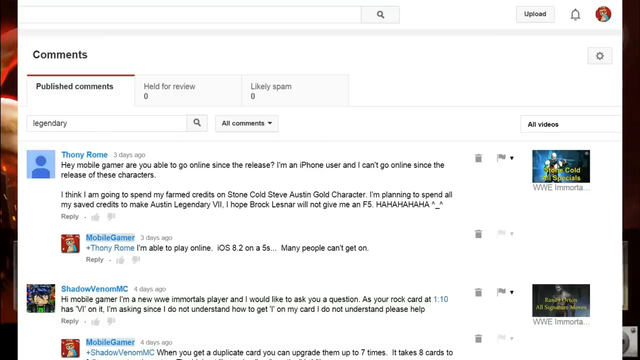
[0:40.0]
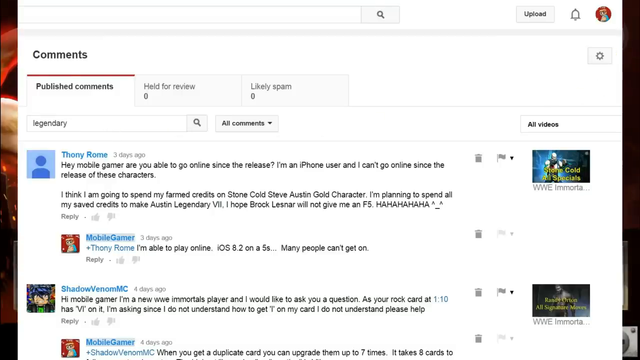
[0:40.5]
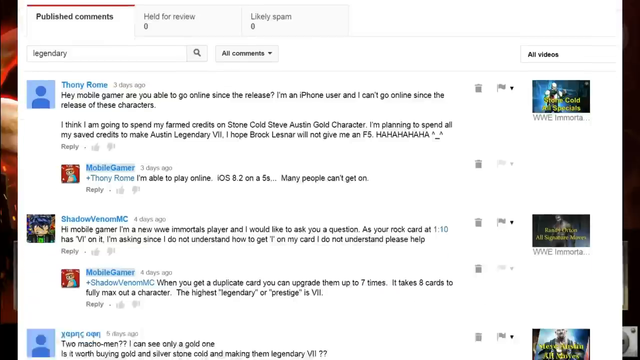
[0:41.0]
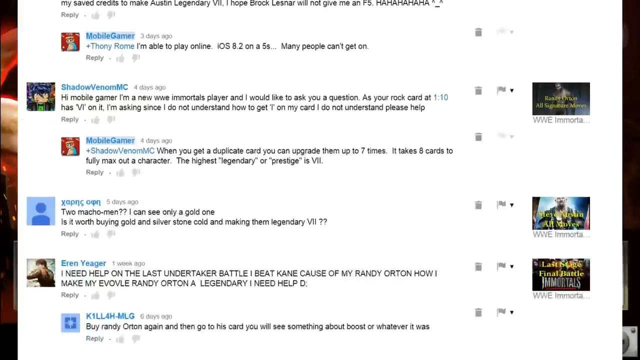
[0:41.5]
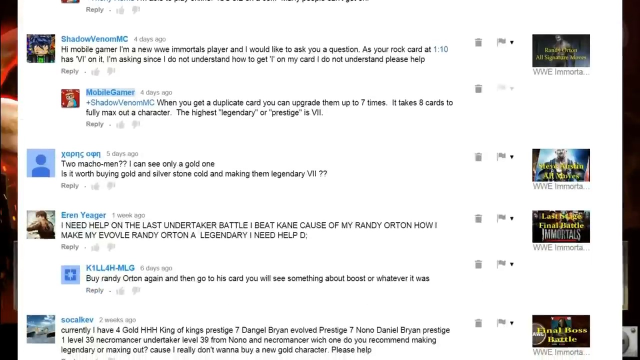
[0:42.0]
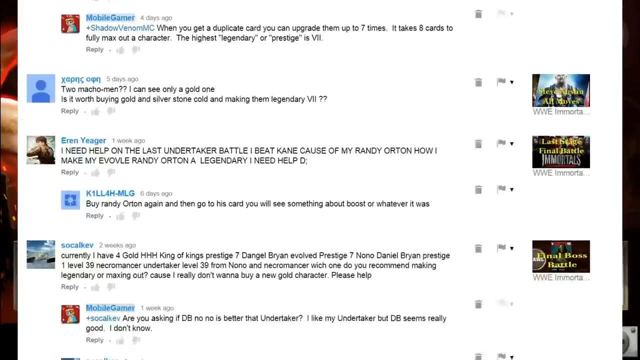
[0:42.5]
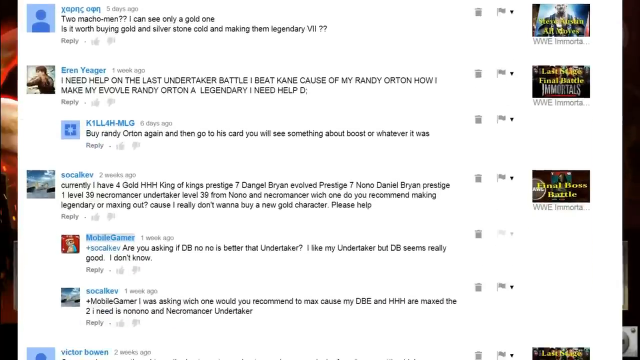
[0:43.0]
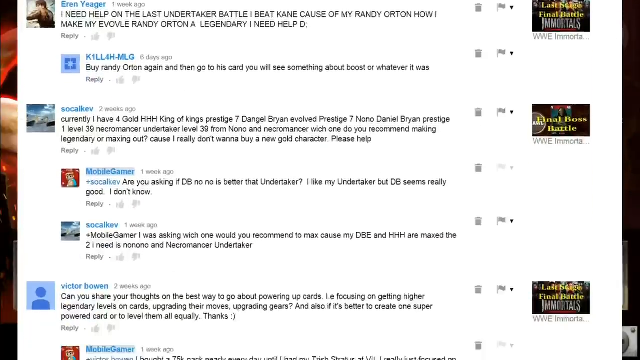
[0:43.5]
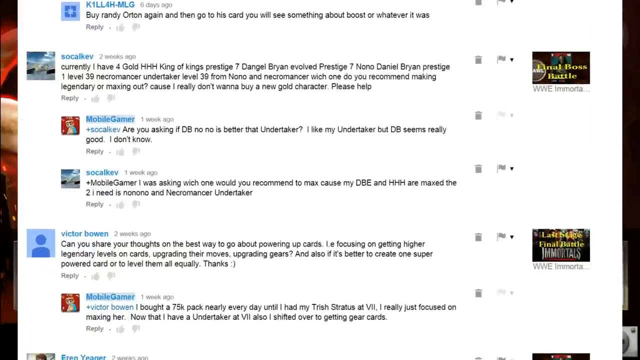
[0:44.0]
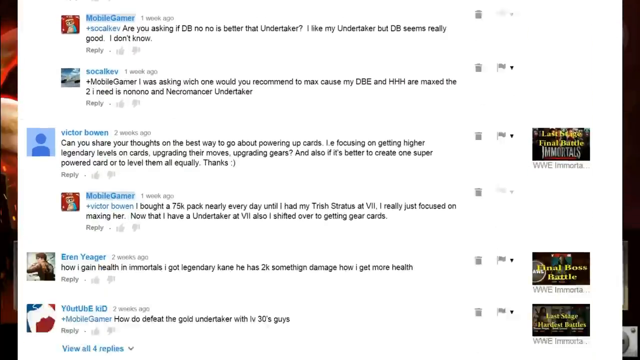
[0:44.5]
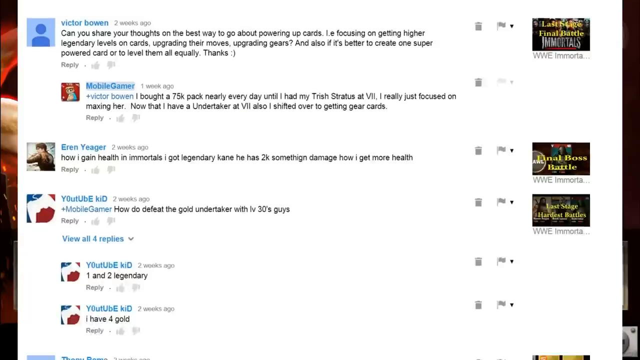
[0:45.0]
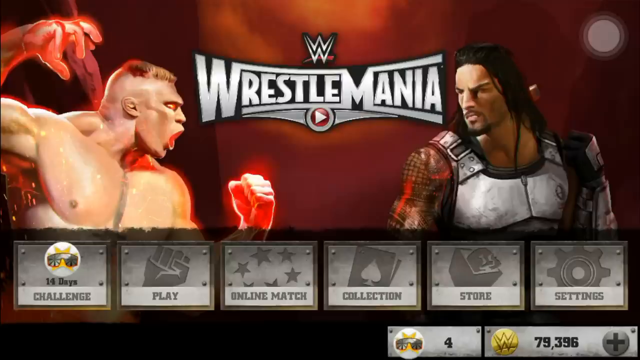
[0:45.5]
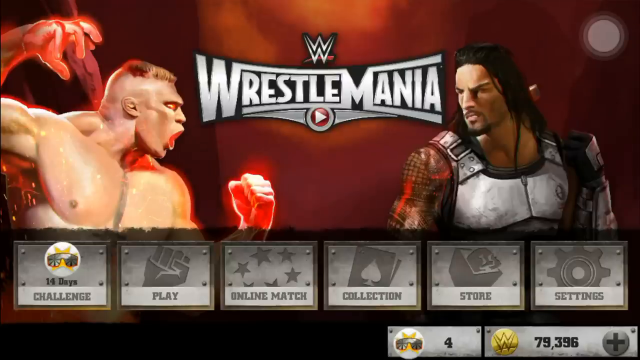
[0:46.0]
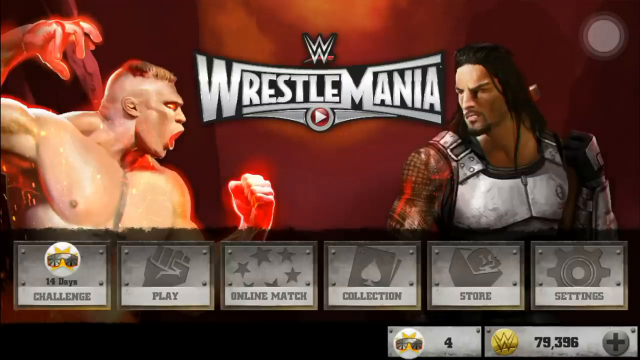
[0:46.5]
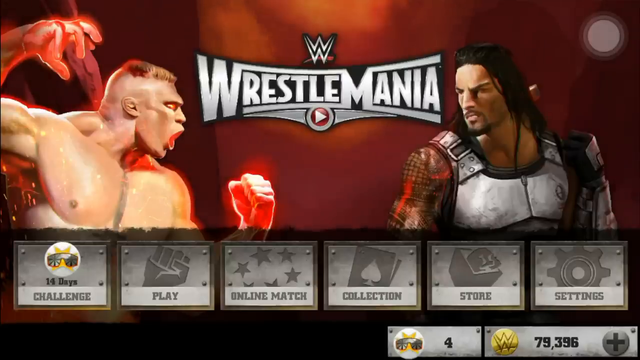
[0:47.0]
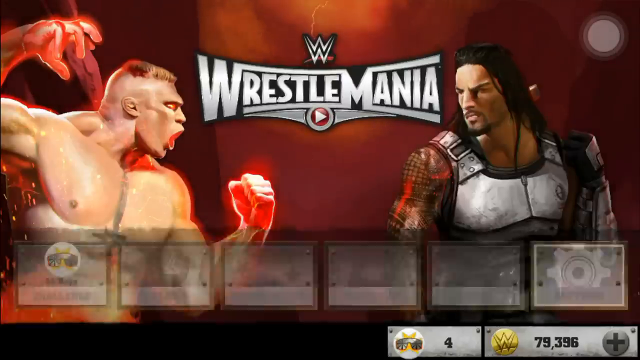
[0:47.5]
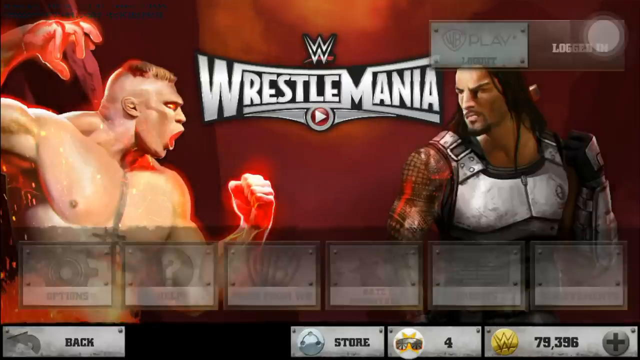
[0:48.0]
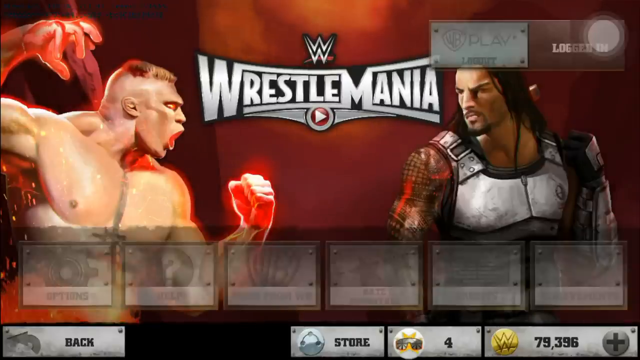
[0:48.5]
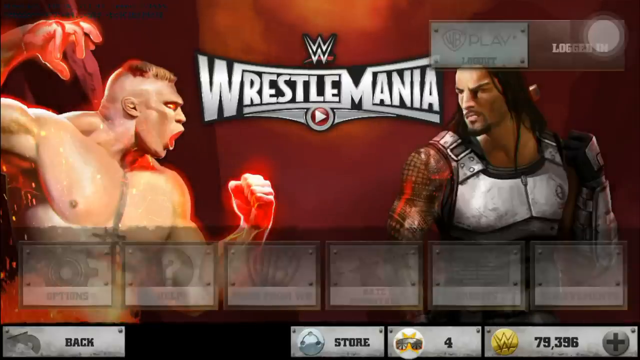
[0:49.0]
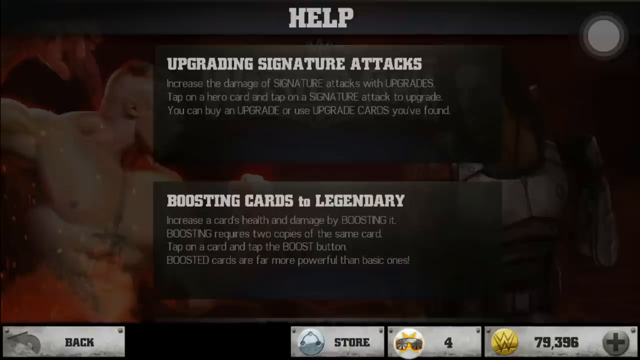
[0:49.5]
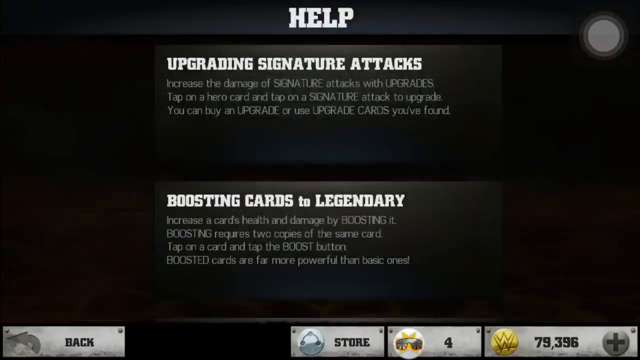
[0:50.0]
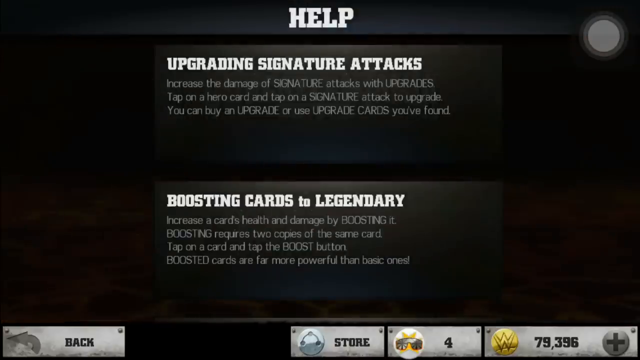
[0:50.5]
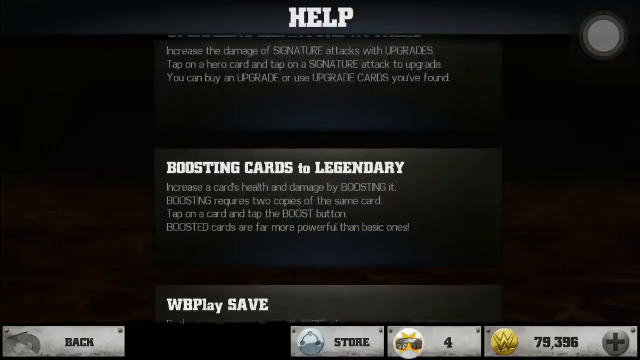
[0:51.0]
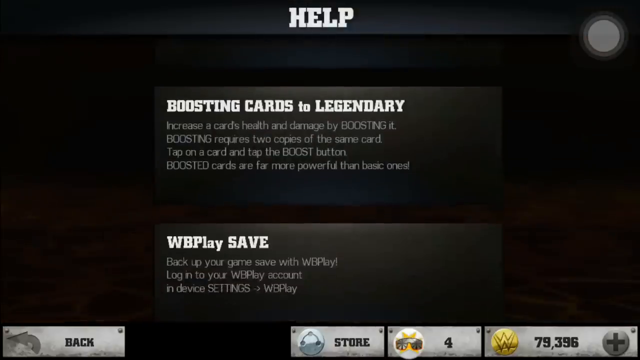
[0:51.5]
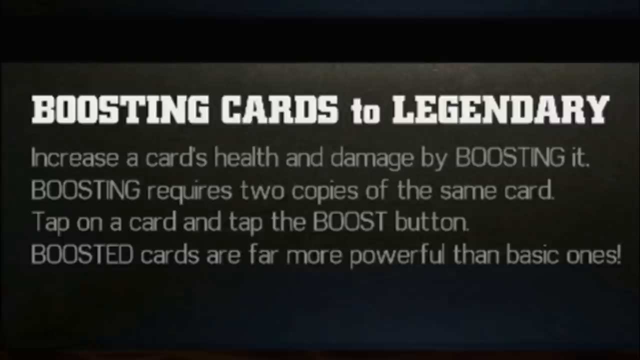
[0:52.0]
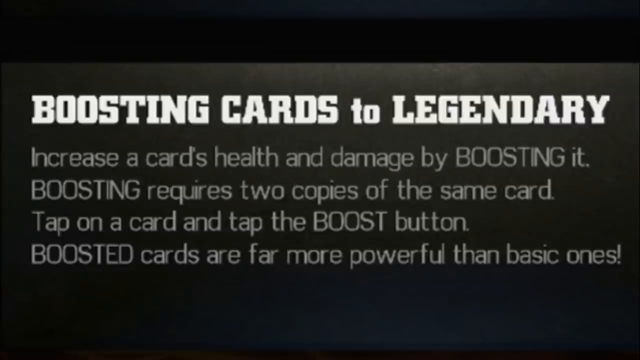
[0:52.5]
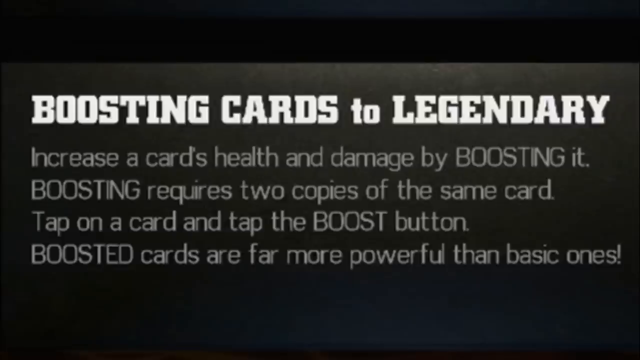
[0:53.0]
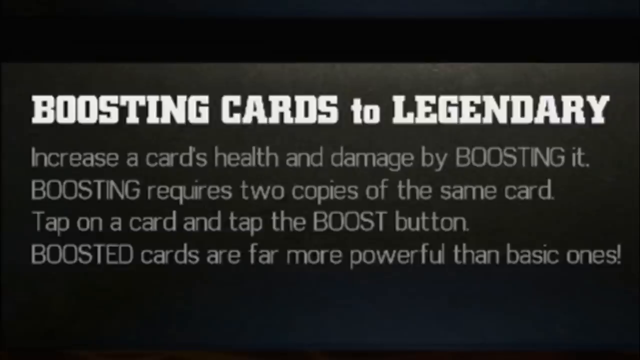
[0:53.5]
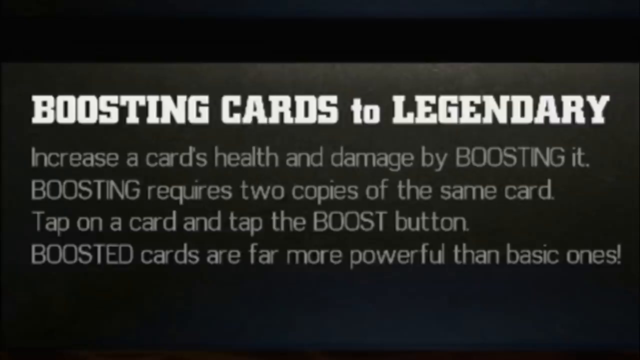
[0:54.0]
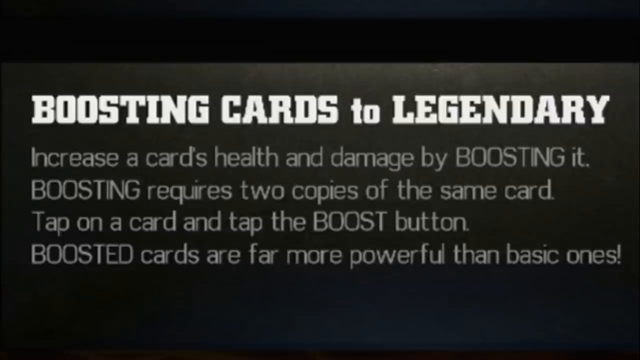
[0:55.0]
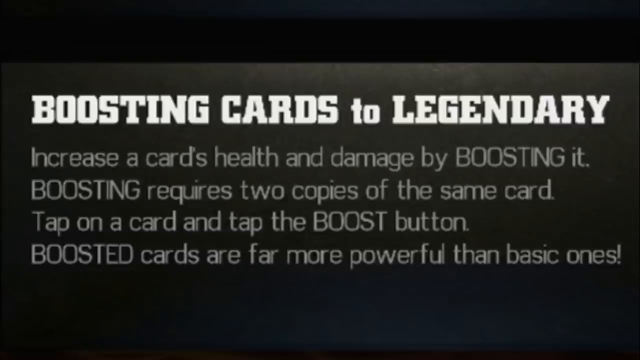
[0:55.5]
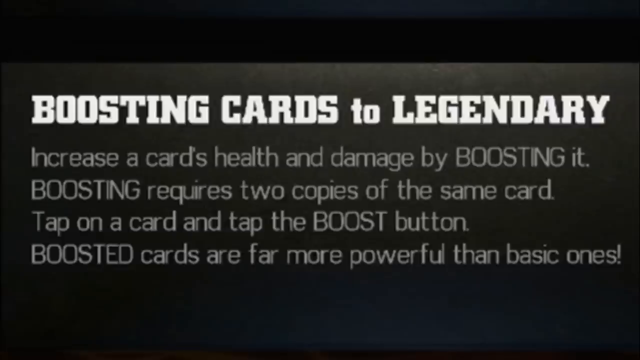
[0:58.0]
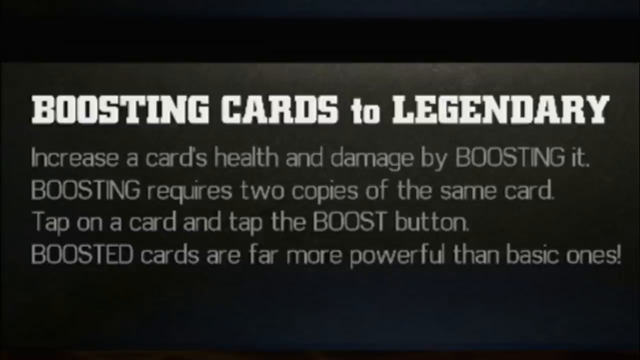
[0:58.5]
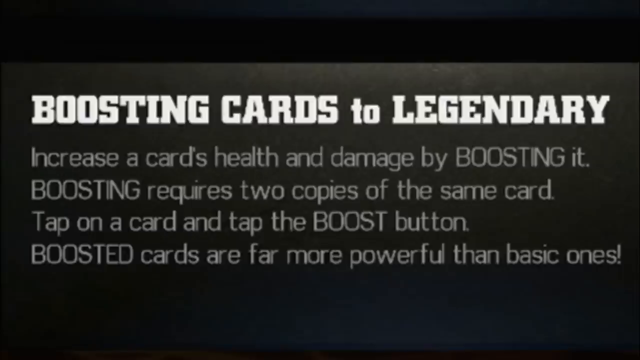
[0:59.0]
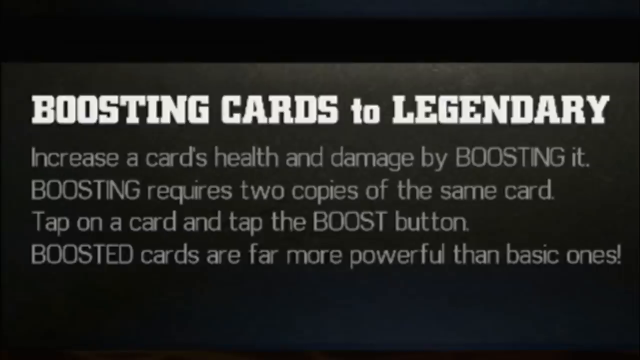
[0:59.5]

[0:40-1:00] The person continues looking through comments. The first one reads "hey mobile gamer are you able to go online since the release? I'm an iPhone user and can't go online since the release of these characters." Another comment mentions spending credits on a gold Steve Austin character and making Austin legendary. Then "wrestlemania" appears on screen, confirming it is a wrestling game. A menu shows the categories challenge, play, online match, collection, settings and store. Text mentions upgrading signature attacks and boosting cards to legendary.